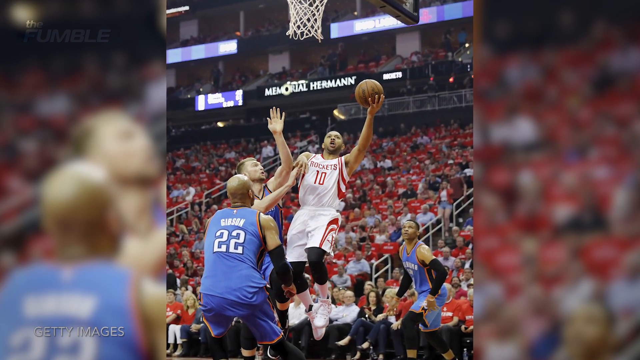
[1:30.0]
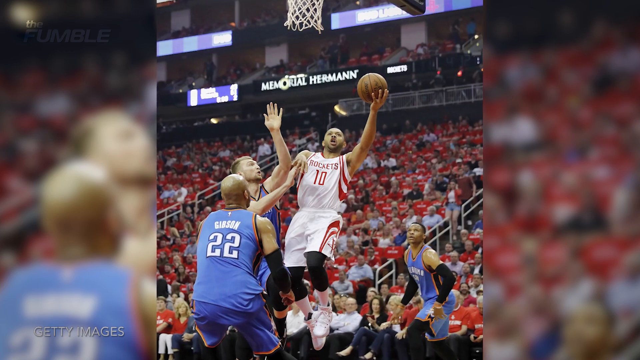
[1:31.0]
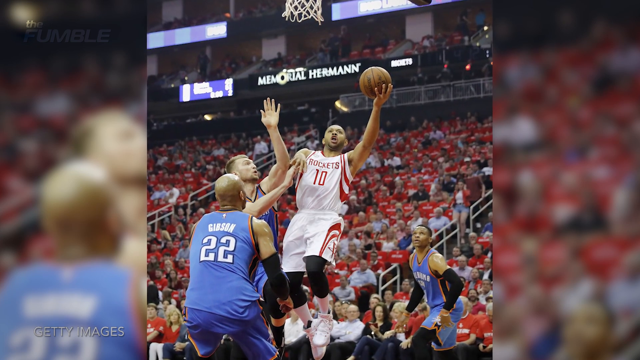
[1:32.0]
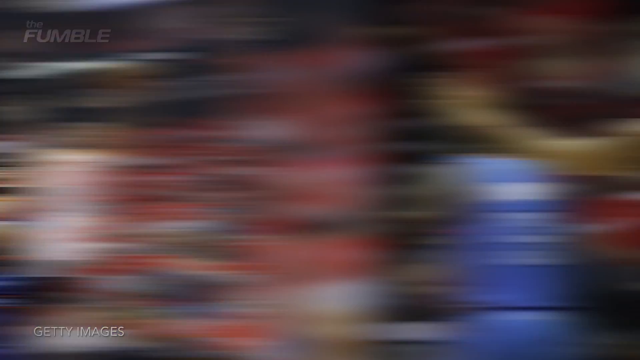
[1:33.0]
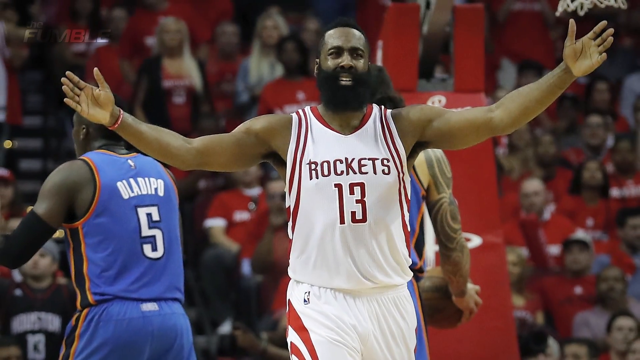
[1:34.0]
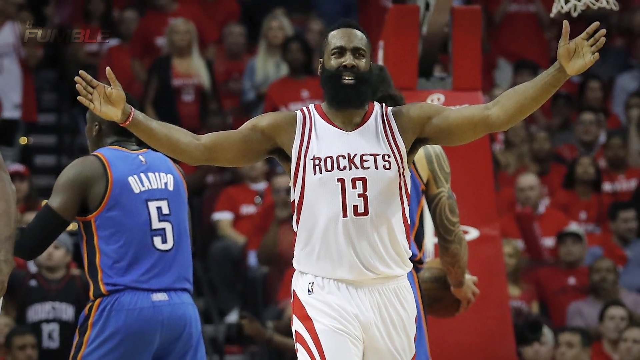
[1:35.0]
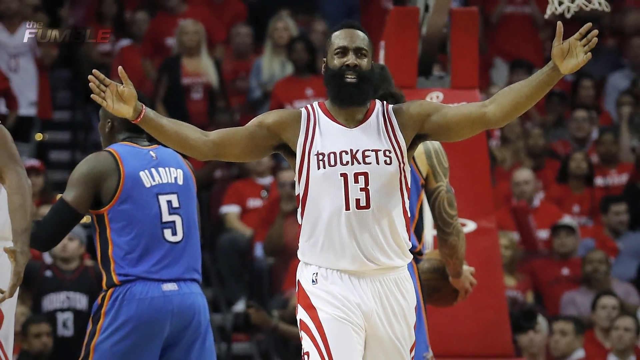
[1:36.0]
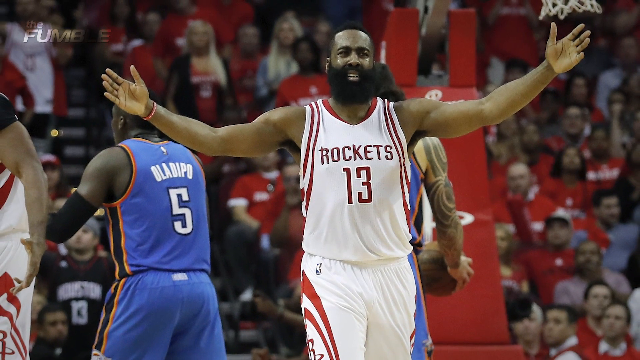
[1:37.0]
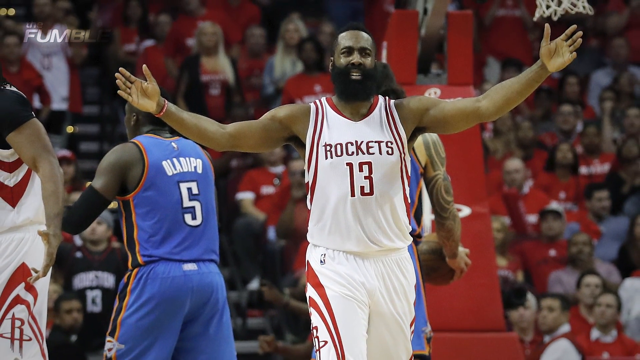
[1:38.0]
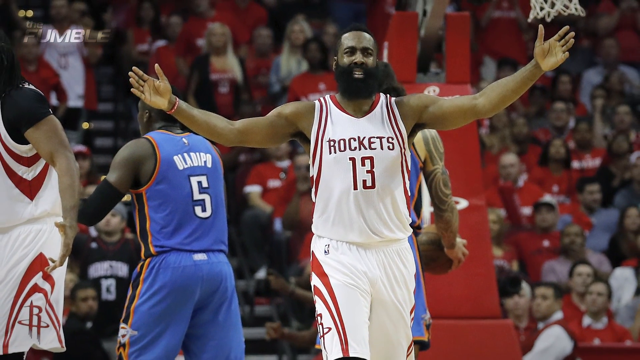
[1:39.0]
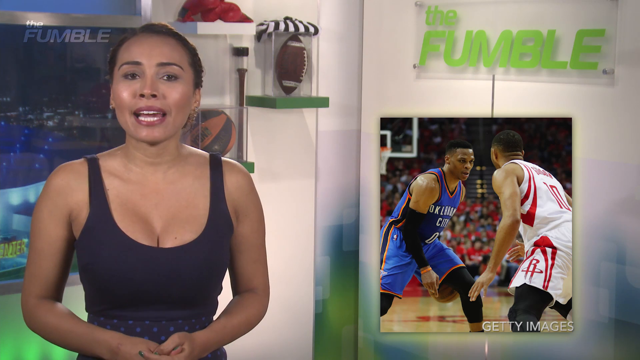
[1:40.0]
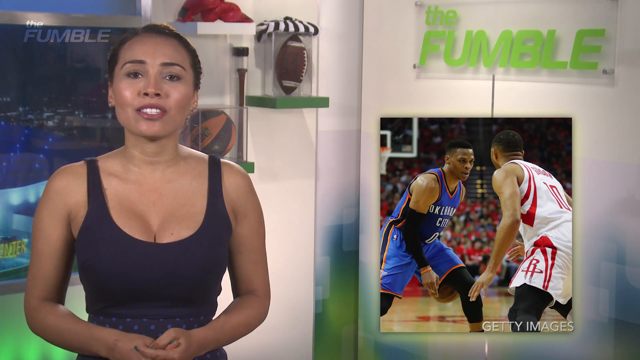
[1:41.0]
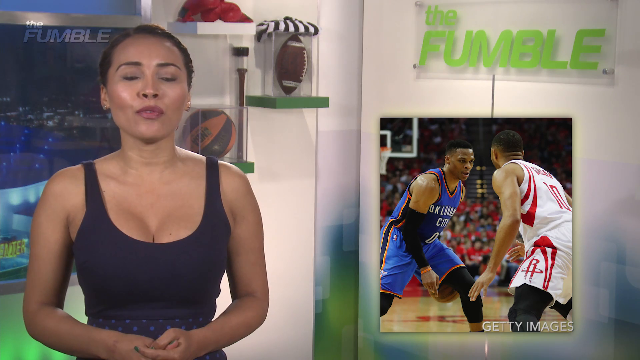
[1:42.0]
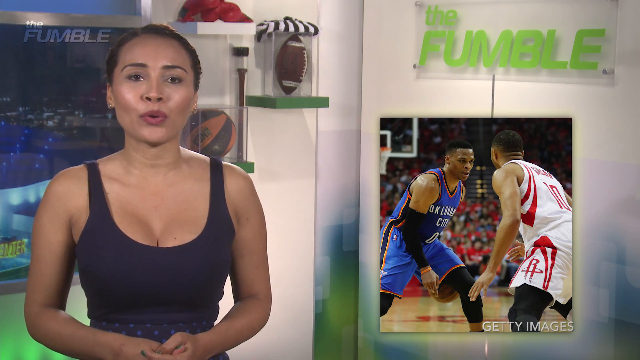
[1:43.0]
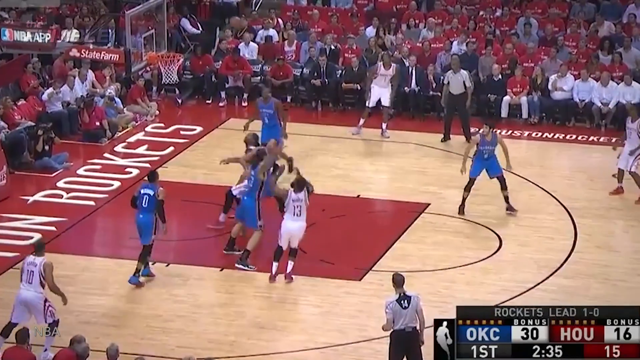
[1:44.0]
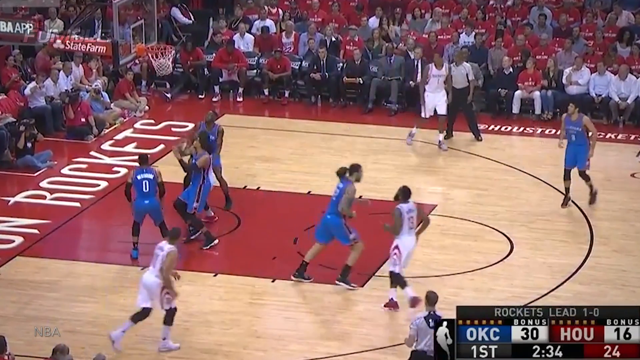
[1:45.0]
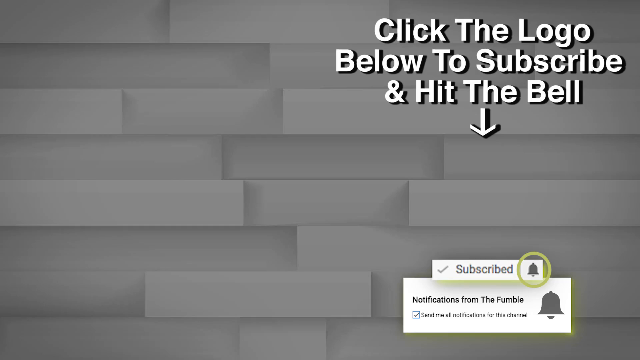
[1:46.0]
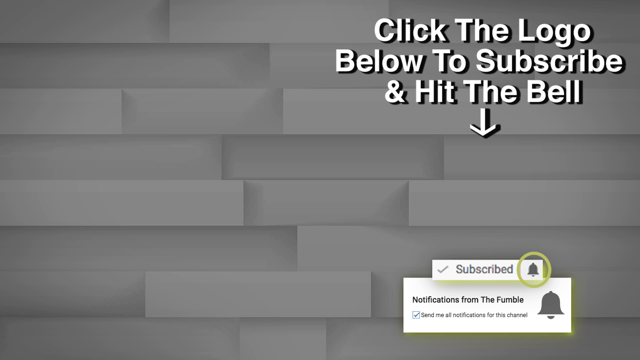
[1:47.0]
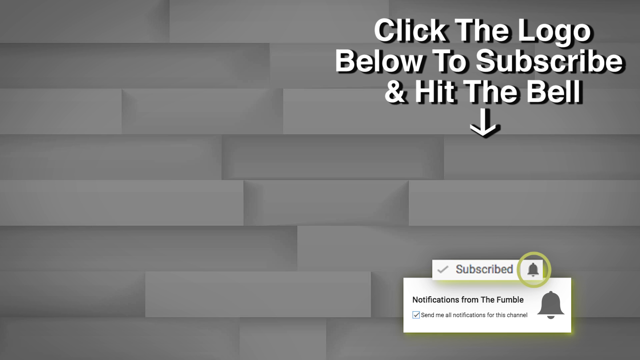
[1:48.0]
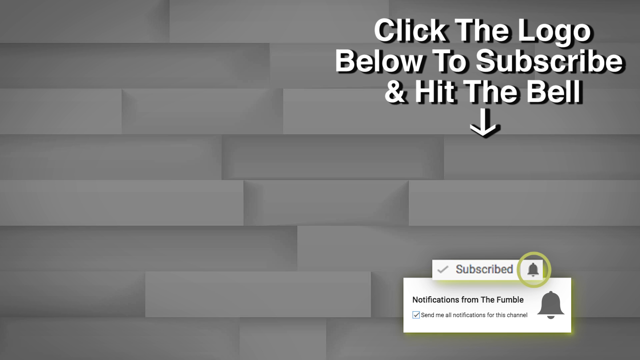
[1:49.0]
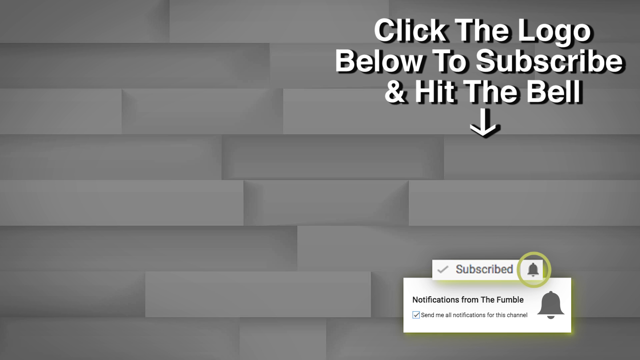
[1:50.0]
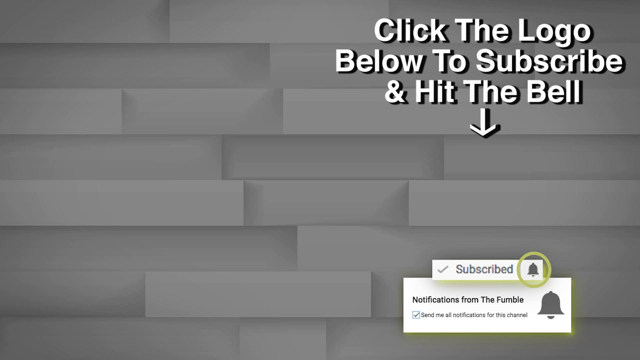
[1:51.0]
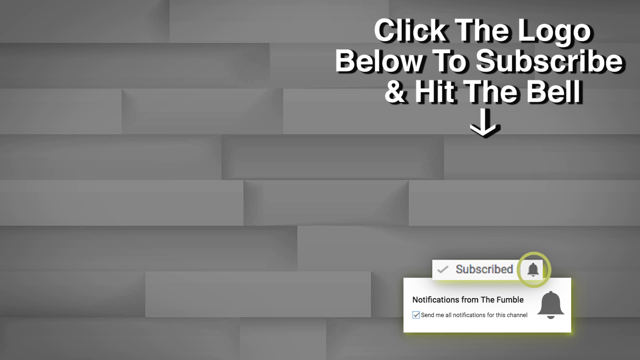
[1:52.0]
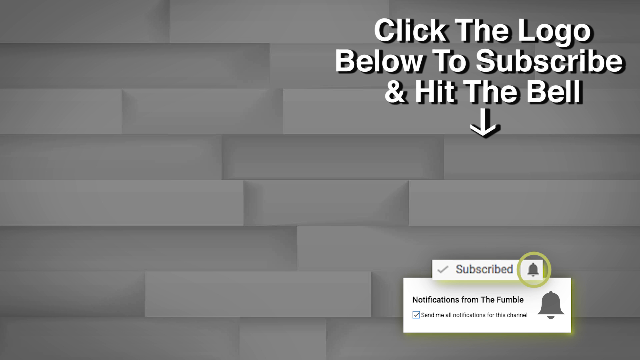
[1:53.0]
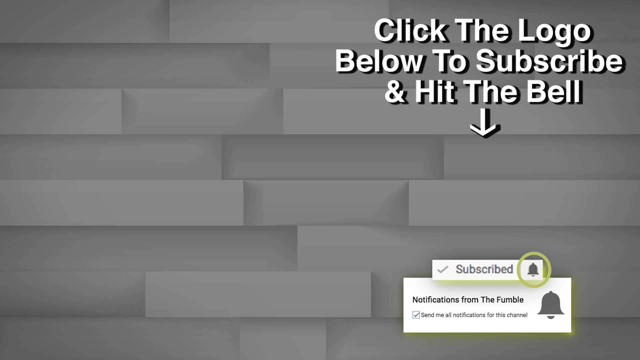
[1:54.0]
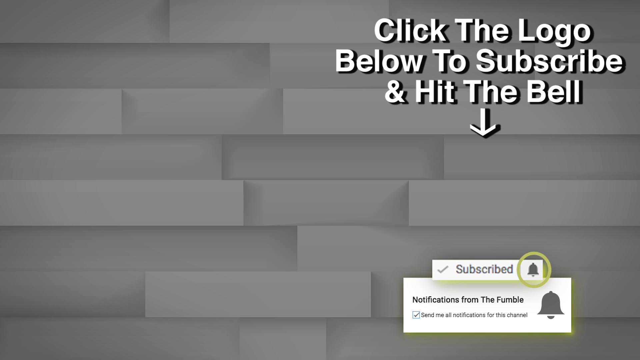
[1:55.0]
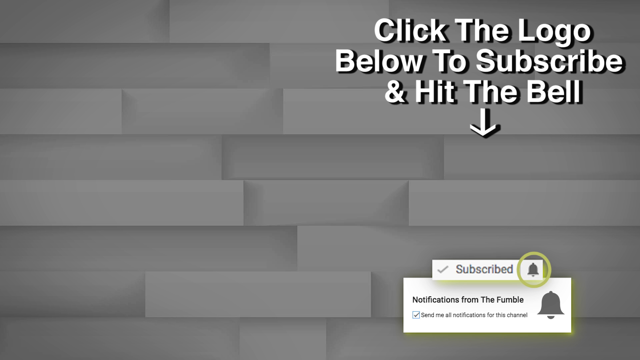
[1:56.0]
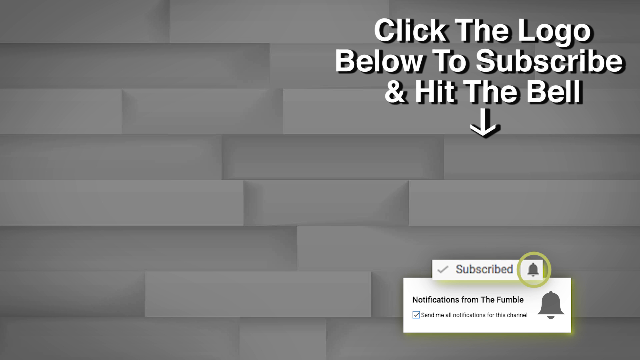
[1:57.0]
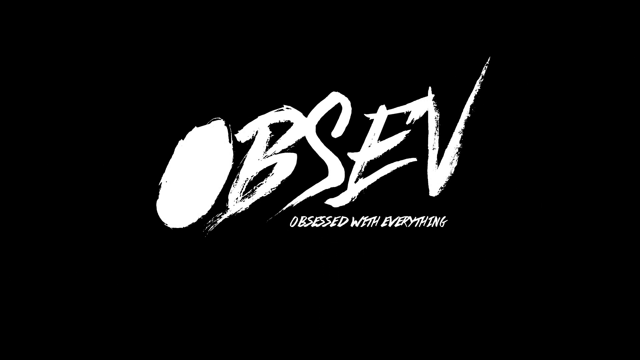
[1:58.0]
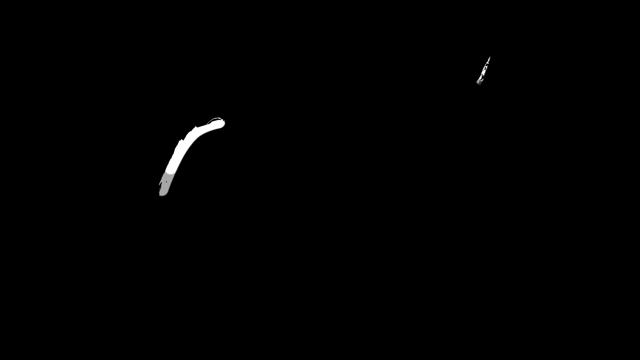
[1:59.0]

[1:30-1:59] The game between the Houston Rockets and Oklahoma City continues to be highlighted. Rockets player Harden, number 13, is seen complaining, and the presenter, Britt, talks. A prompt appears to follow and subscribe to the channel, the funnel, and to hit the bell for notifications. The video ends with "obsessed with everything".